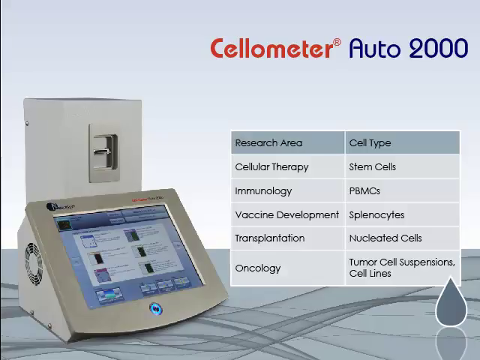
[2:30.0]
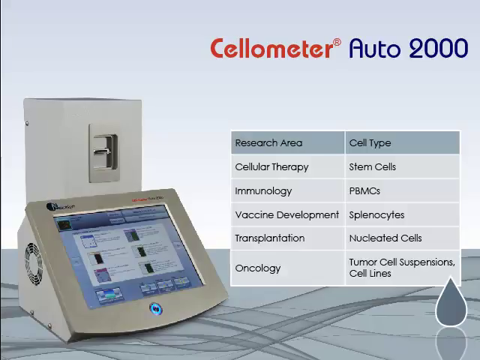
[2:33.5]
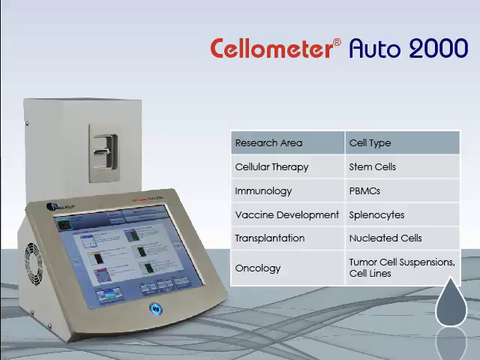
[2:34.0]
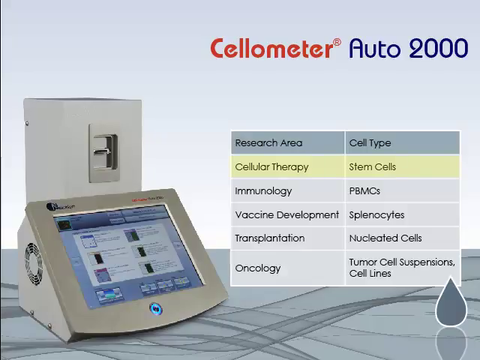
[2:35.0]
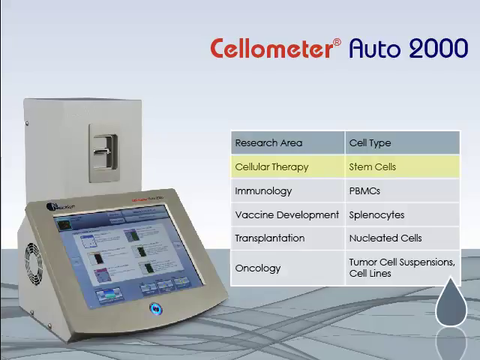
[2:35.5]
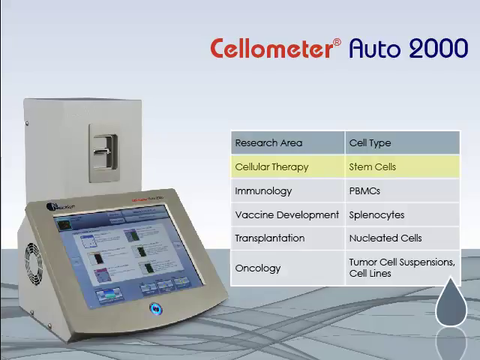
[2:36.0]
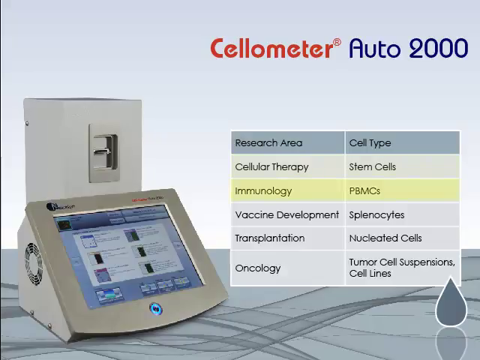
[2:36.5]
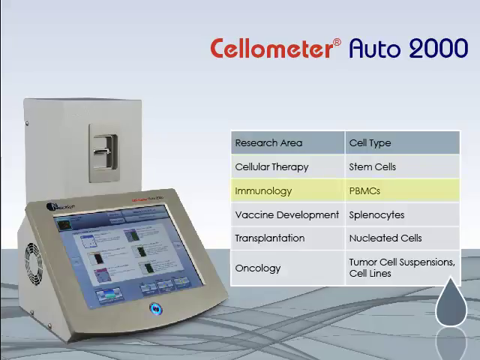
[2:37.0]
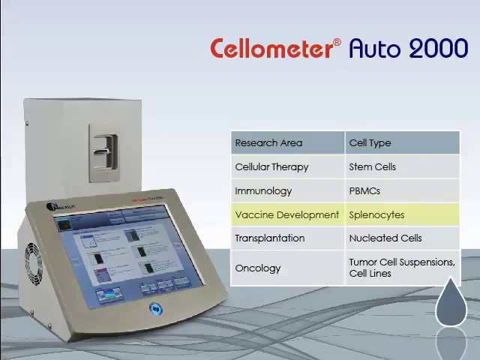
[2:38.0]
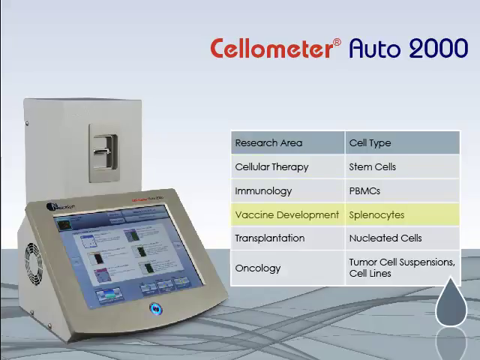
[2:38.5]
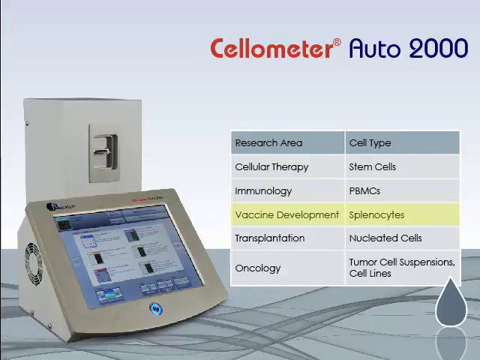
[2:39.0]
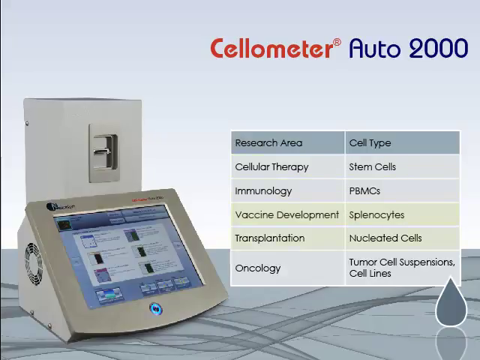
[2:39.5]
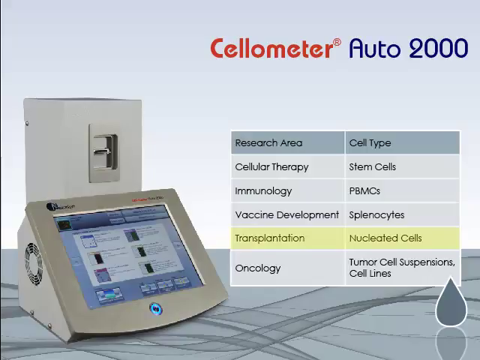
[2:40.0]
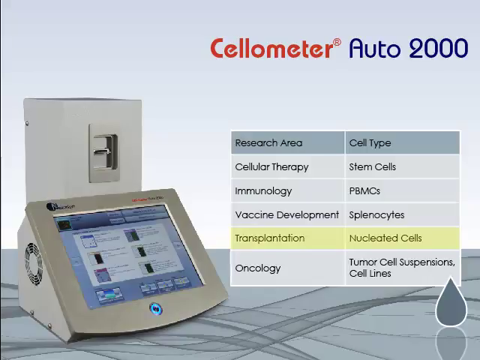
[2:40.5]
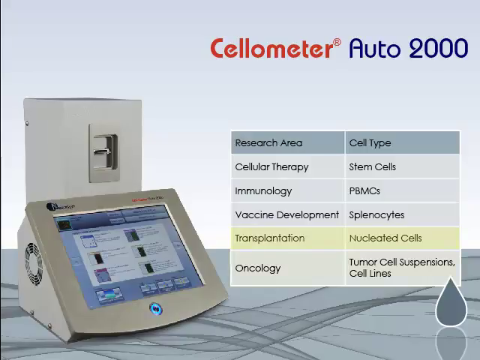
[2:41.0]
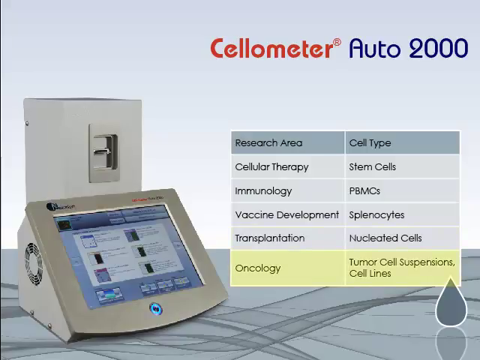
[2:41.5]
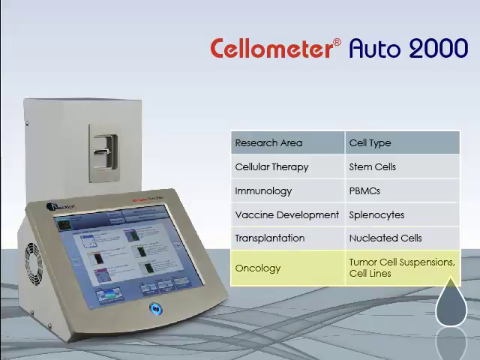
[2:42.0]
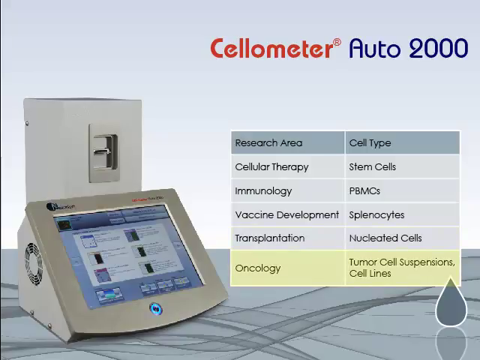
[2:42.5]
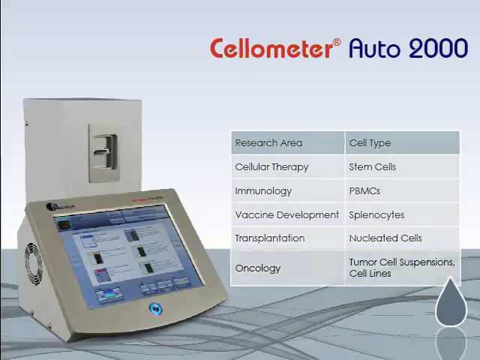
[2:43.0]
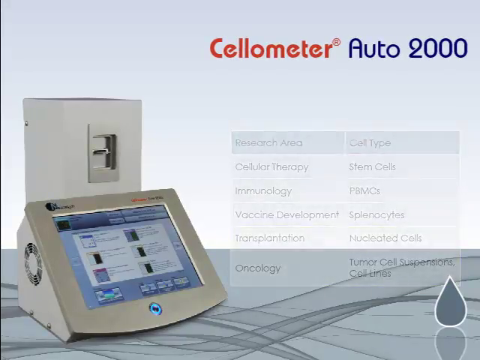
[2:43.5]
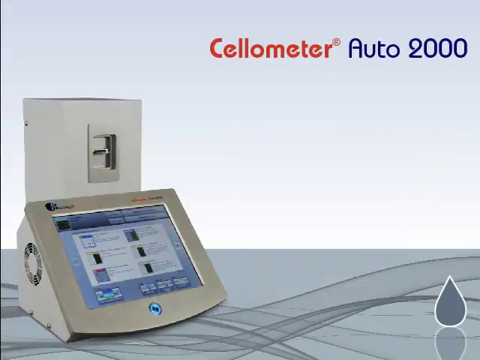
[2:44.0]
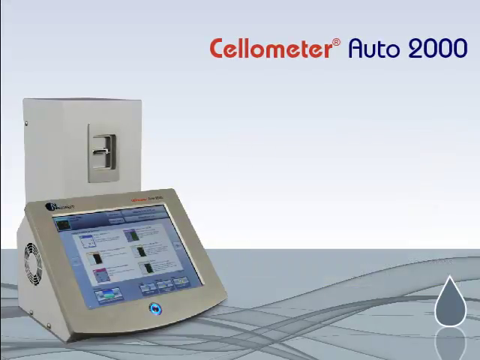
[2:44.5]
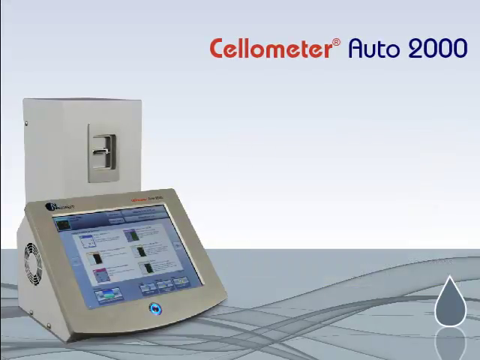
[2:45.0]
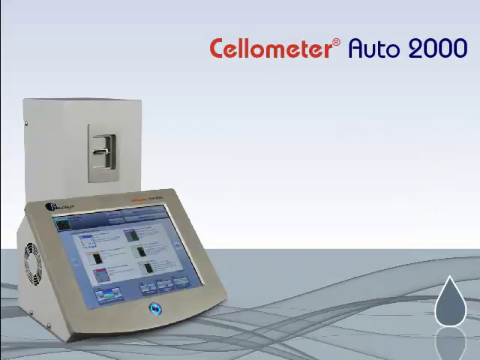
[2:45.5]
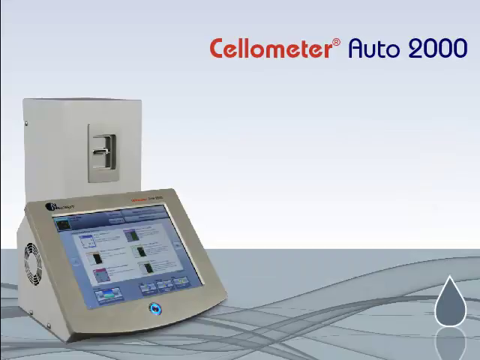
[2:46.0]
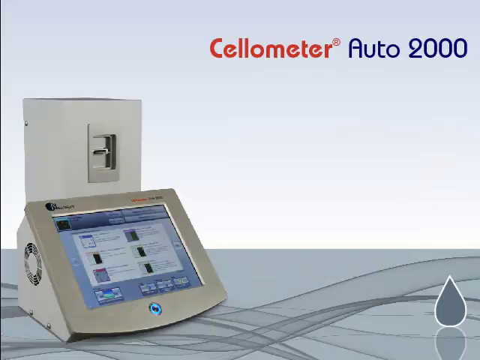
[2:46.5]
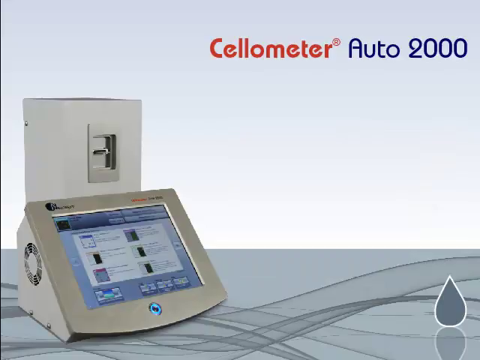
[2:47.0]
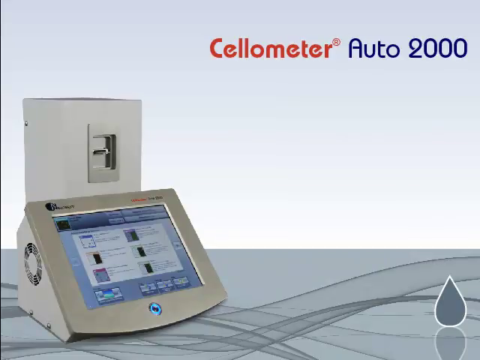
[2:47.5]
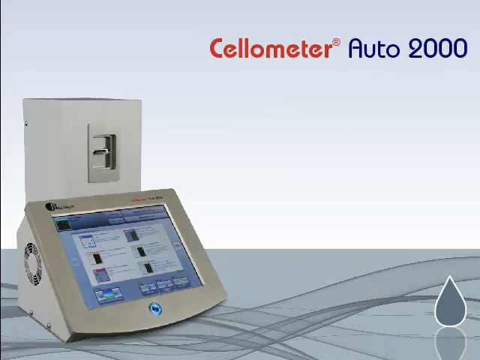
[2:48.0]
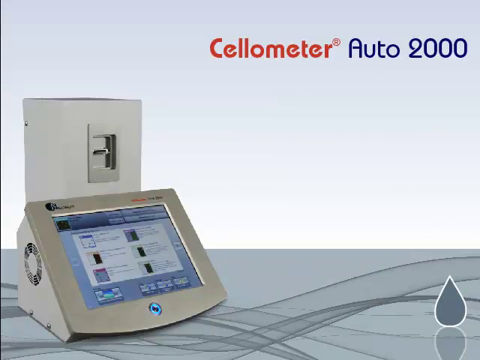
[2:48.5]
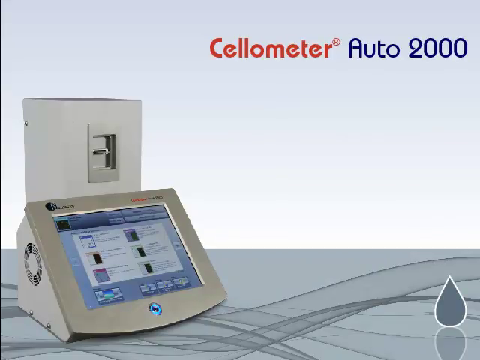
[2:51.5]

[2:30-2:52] The research area chart of the device also lists cell types: stem cells, PBMCs, splenocytes, nucleated cells, and tumor cell suspensions. The chart continues with the device in the background to the left against a light blue background, sitting on a slate gray table with curvy lines on it. A teardrop icon appears in the lower right of the image, which shows a reflection. The video ends with the cellometer device sitting on a table with its screen facing above and to the right; no technician is visible. The overall colors are tan, blue, black, gray and red.